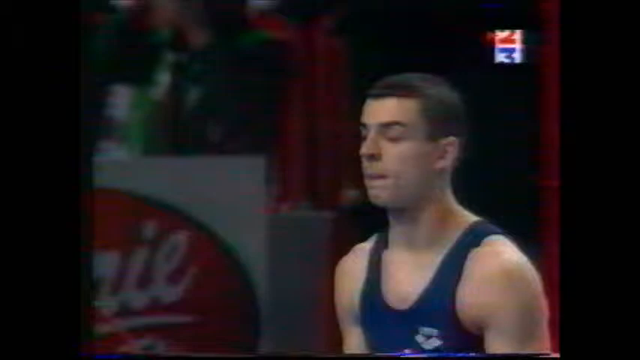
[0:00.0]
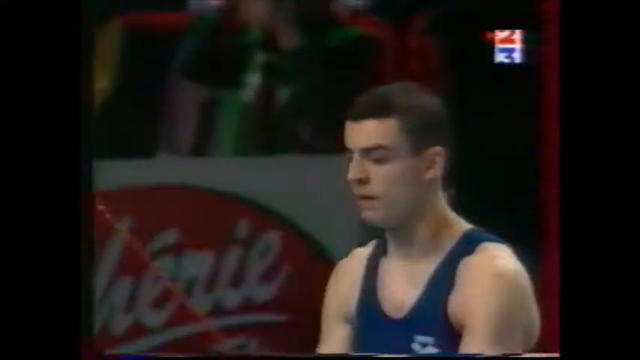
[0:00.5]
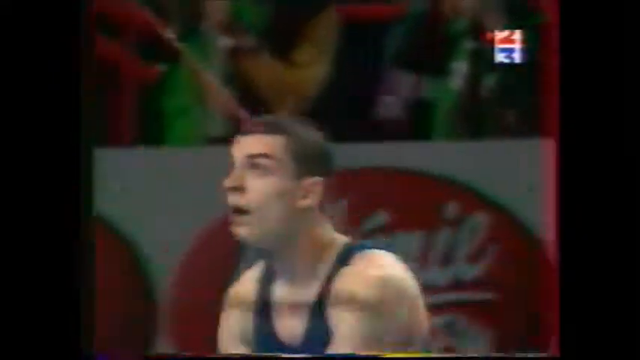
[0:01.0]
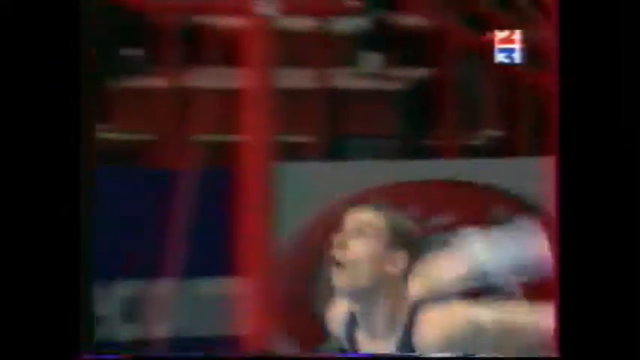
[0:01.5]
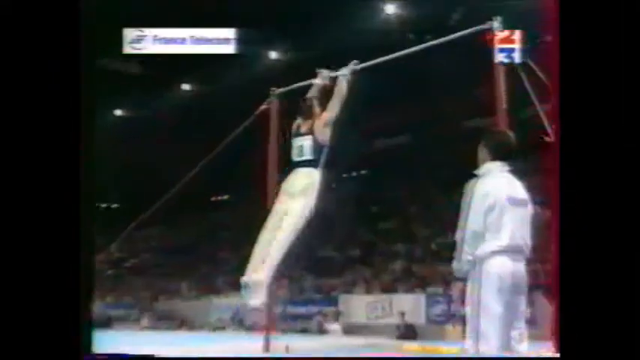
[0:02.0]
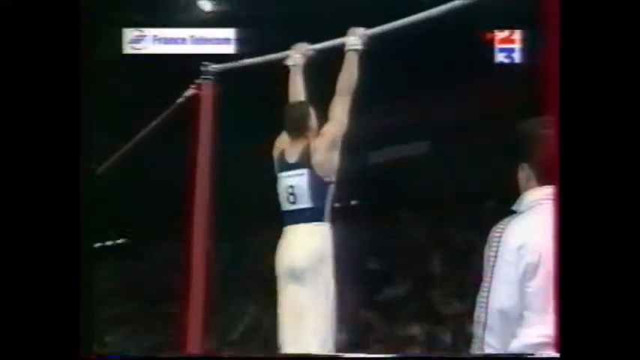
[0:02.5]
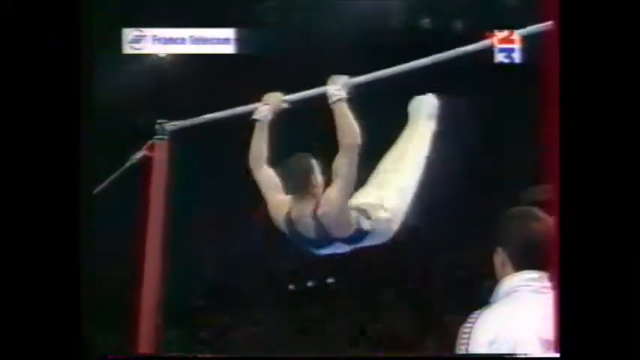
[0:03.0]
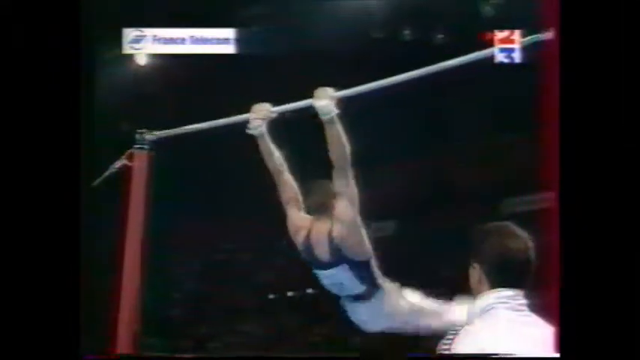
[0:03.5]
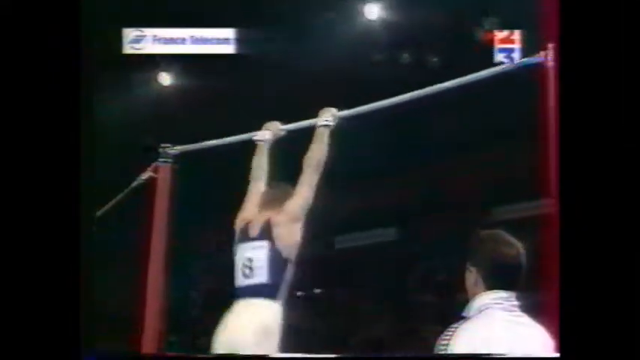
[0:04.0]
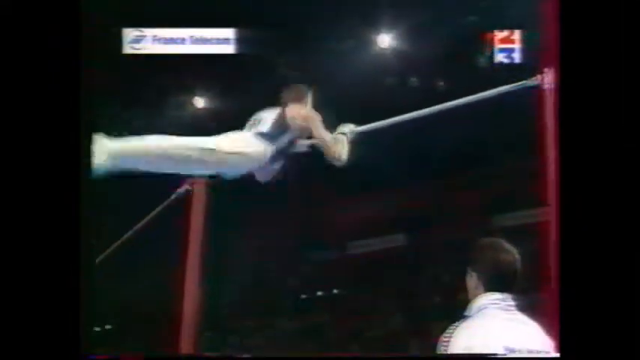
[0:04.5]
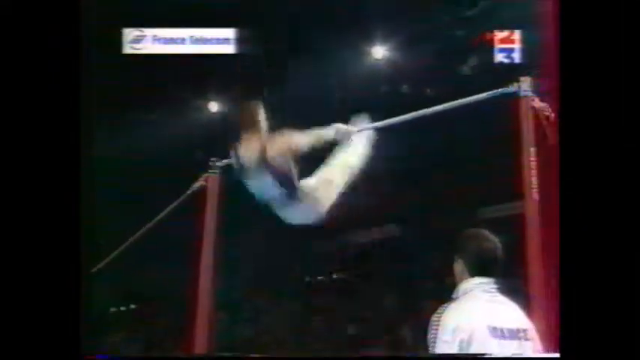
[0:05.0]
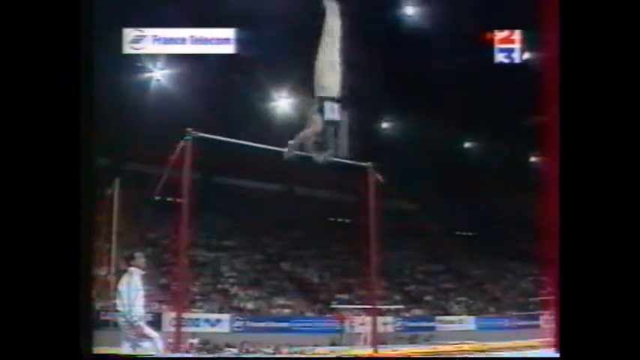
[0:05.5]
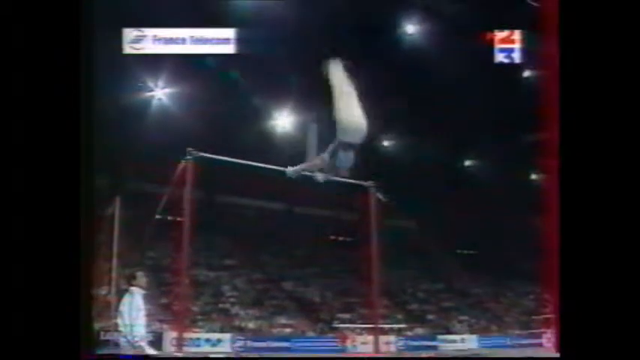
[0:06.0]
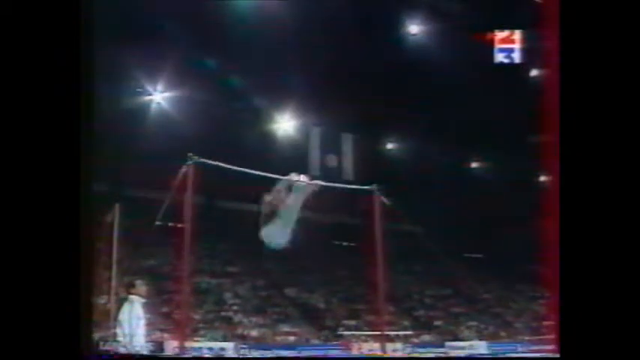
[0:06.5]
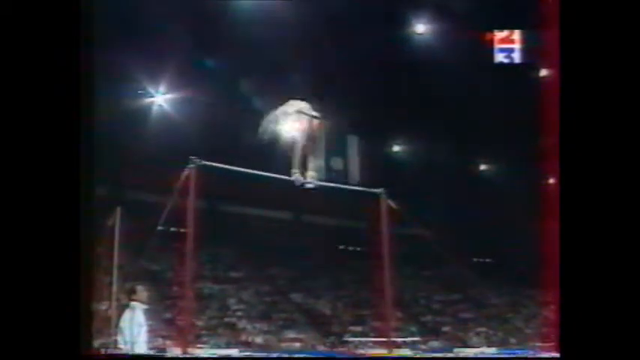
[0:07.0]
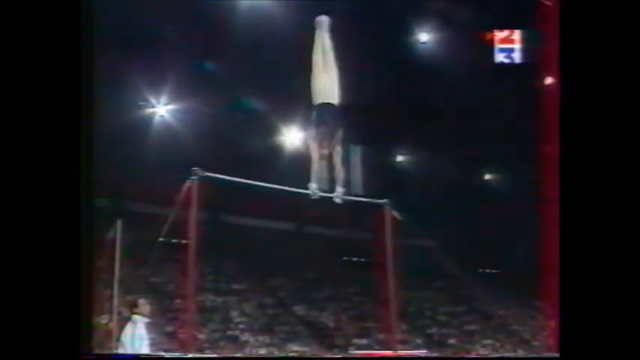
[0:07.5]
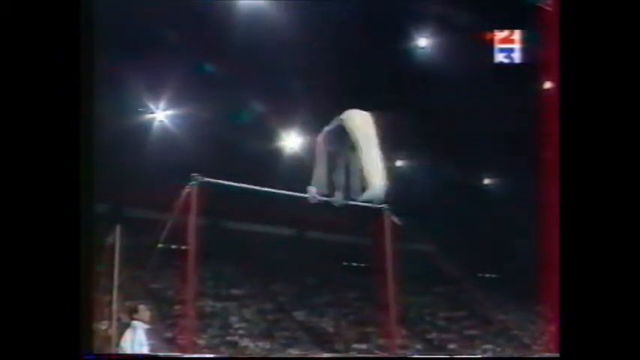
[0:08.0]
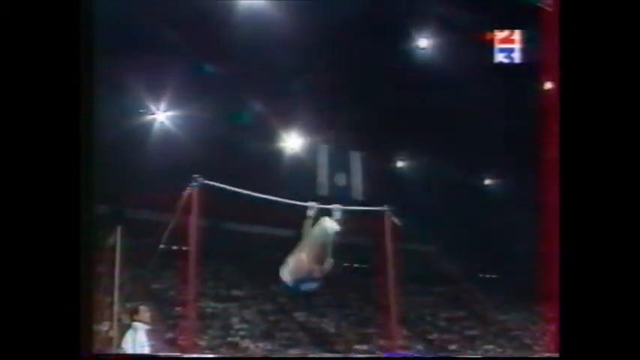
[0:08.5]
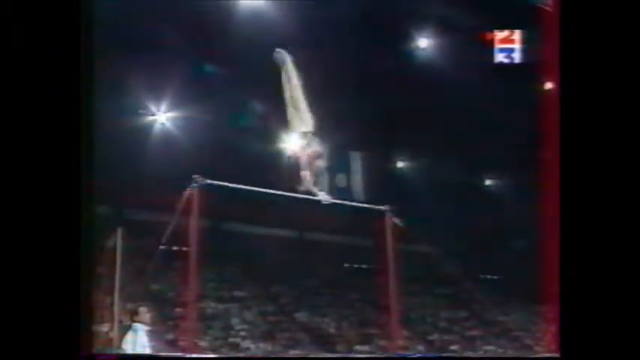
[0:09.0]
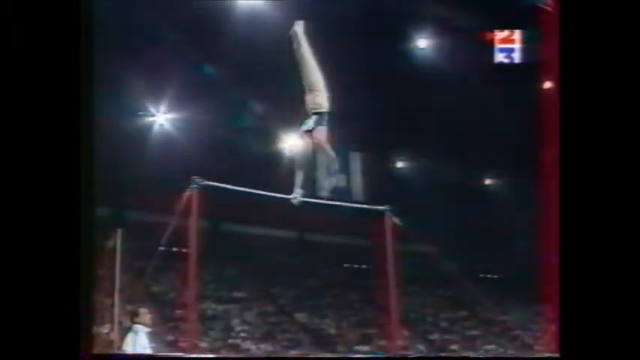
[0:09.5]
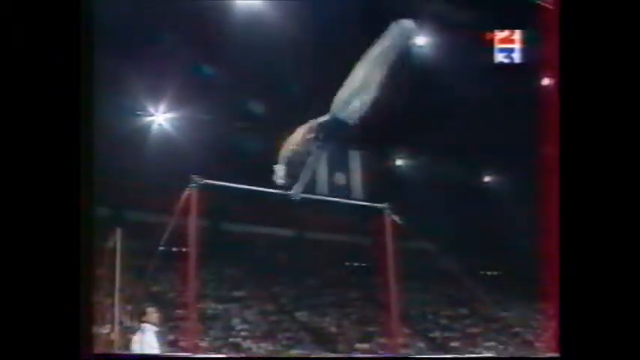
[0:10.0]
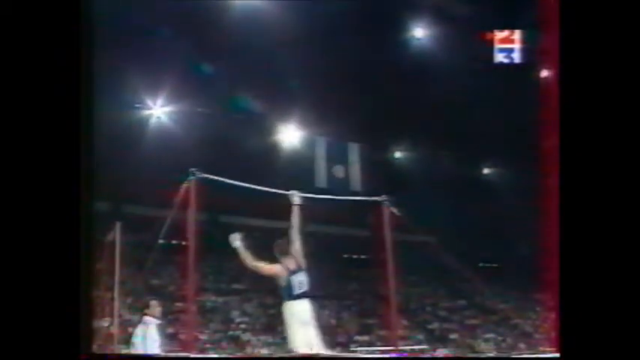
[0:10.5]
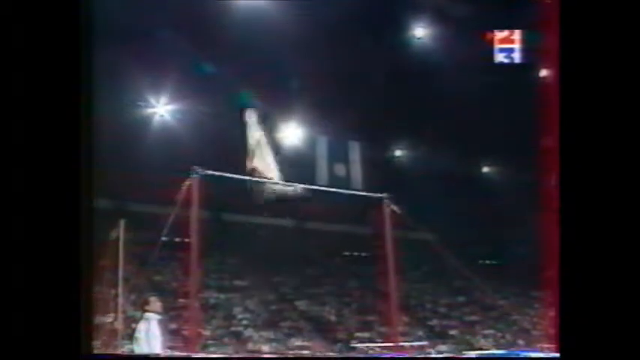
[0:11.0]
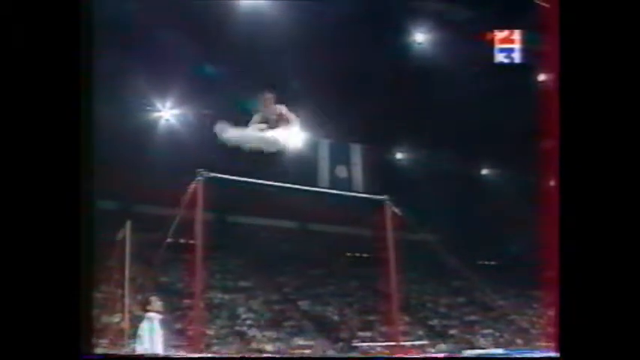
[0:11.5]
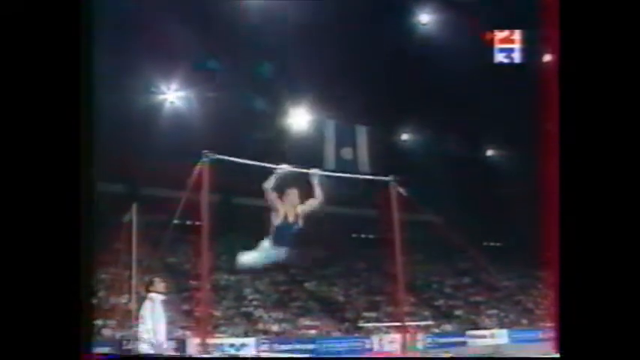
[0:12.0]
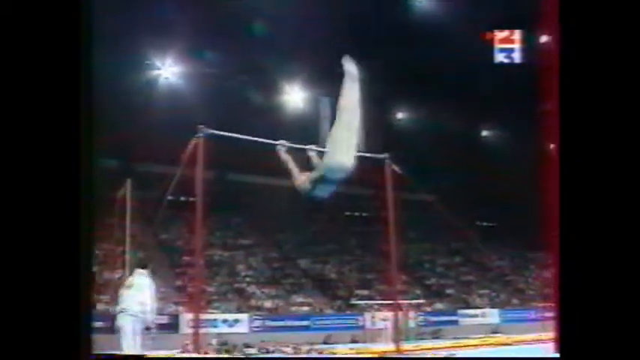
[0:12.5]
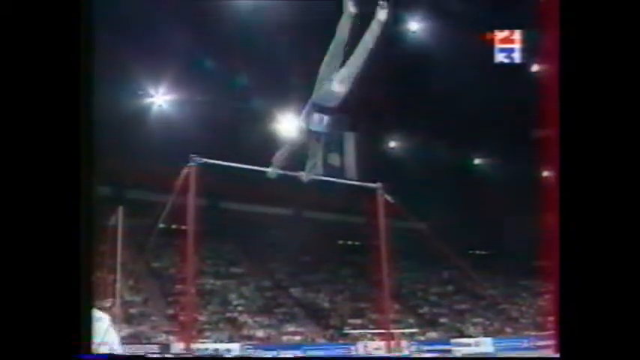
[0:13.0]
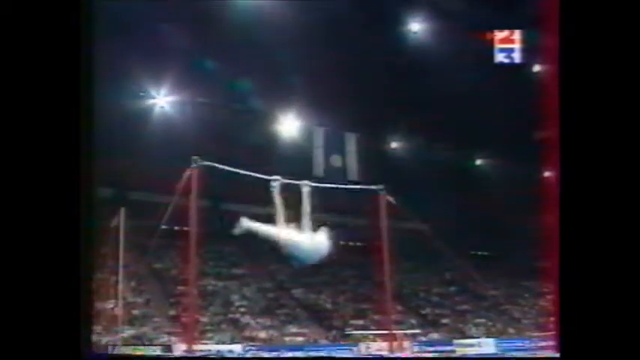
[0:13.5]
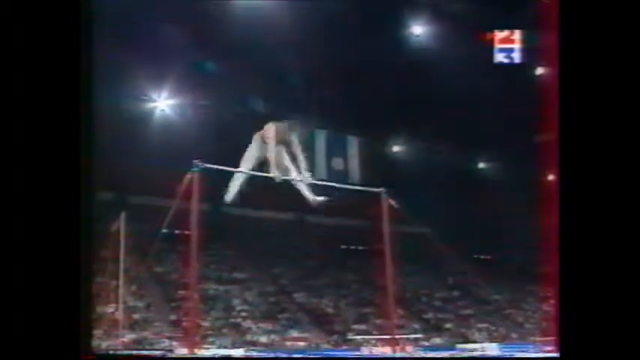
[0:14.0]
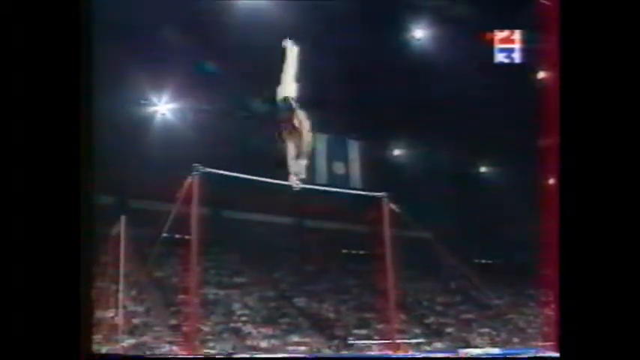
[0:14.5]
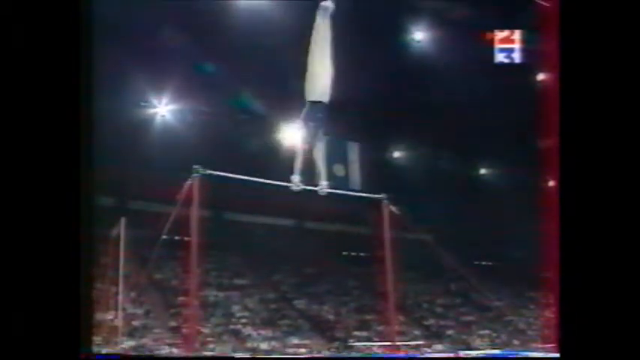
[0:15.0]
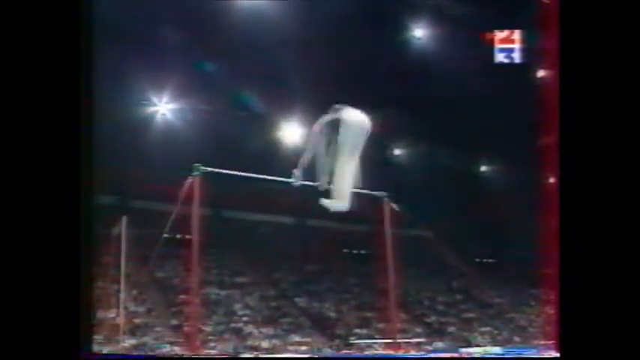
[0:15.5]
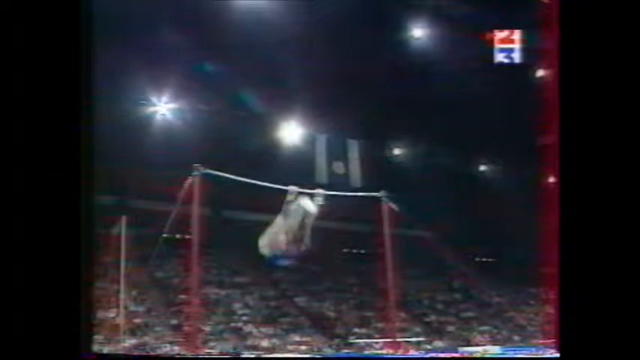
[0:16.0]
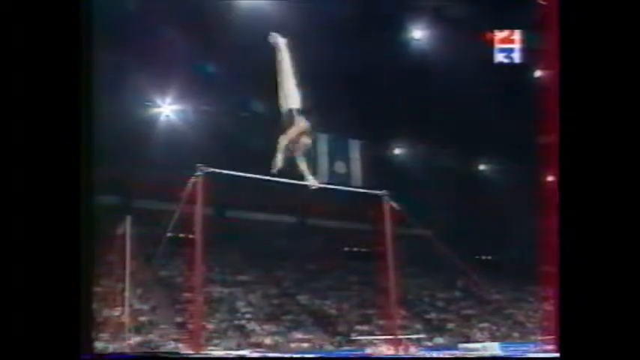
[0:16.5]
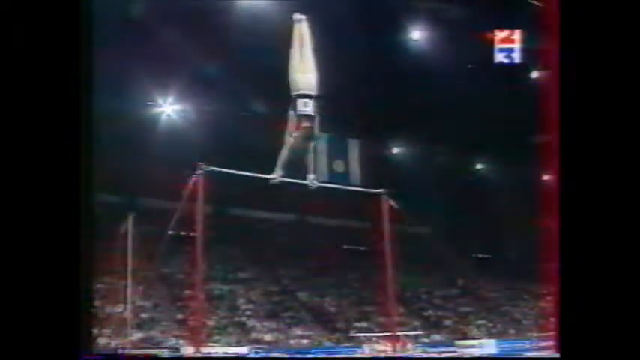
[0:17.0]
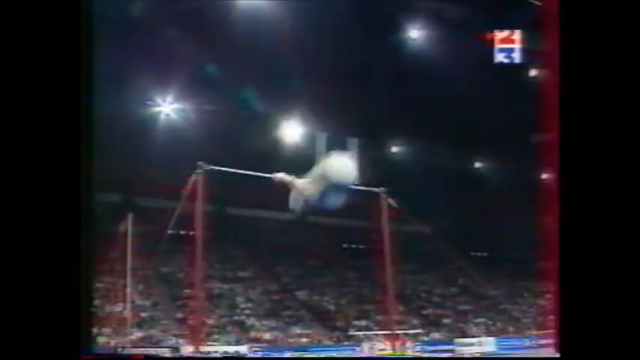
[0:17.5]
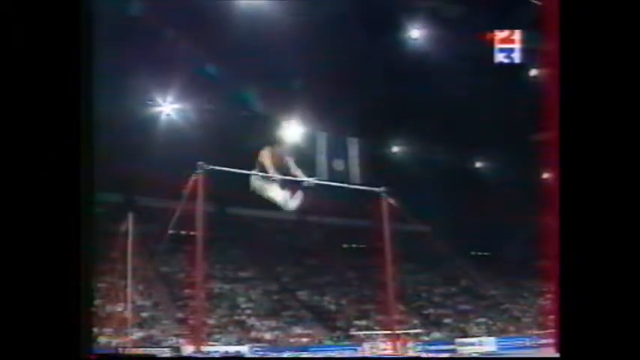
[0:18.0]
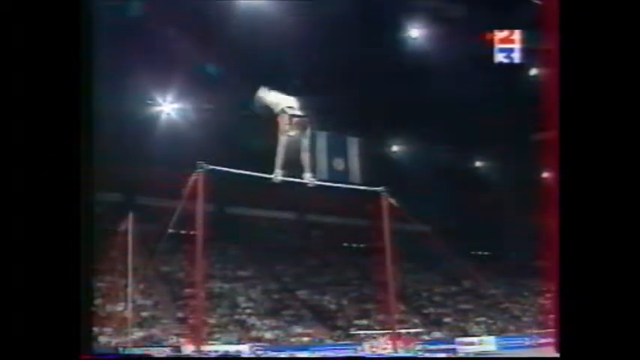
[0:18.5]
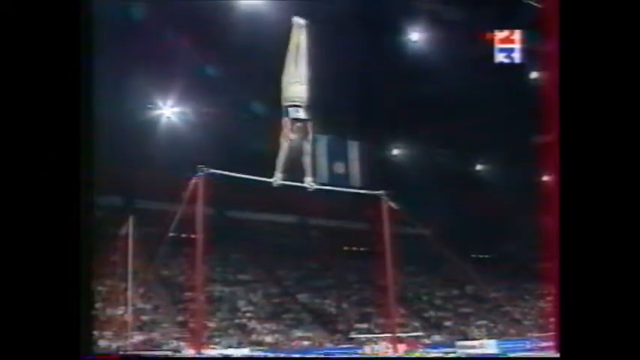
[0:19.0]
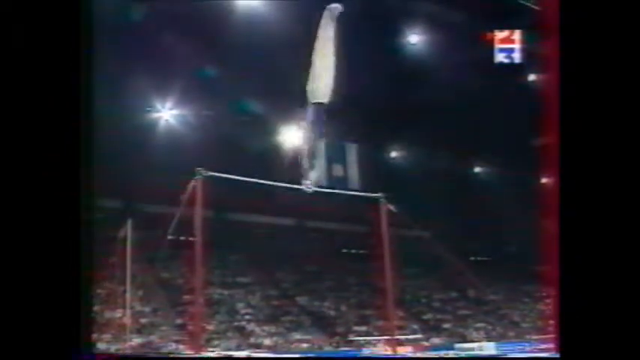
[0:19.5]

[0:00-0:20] A men's gymnastics competition, with a man performing on the bar. He jumps up onto it by himself. He wears white pants and a black or blue top. His coach watches from the side. The bar itself is white and the supporting beams are red. In the top right corner, the numbers 2 and 3 appear in a box. He spins around with one arm, then goes the opposite direction. He splits his legs, spins the other way, goes up to a handstand and turns the other direction. He turns again, each time tucking his legs between his arms as he goes up rather than letting them hang below him. He pivots at the top and starts swinging the opposite direction again. A flag is visible in the distance in the stairs. The crowd is there, but it is so dark they cannot be seen very well; only four or five lights are visible above the bar, around where the flag is.